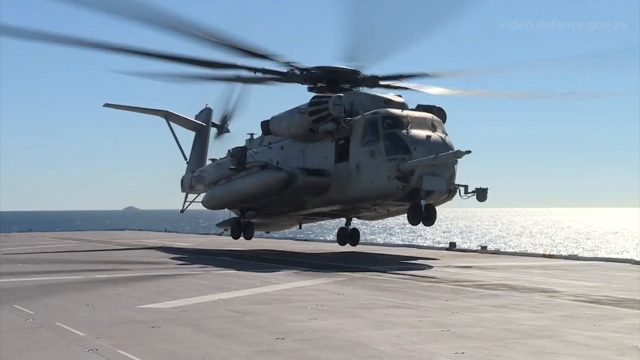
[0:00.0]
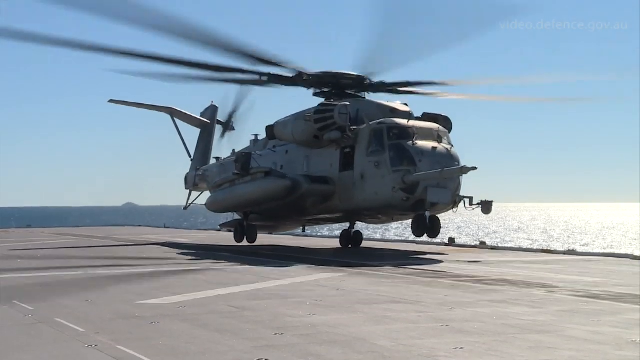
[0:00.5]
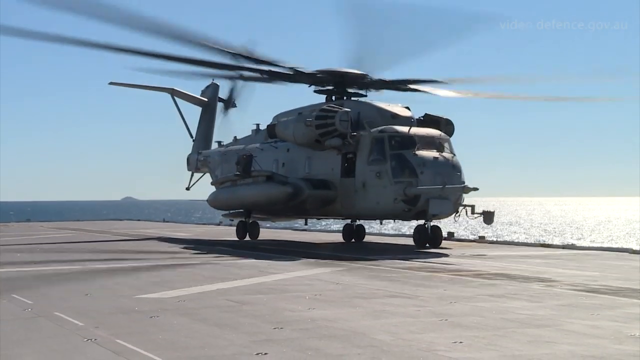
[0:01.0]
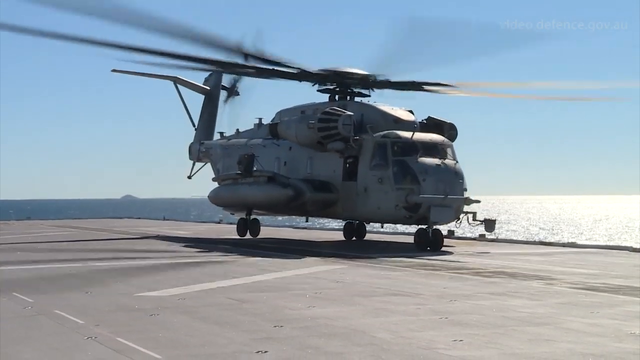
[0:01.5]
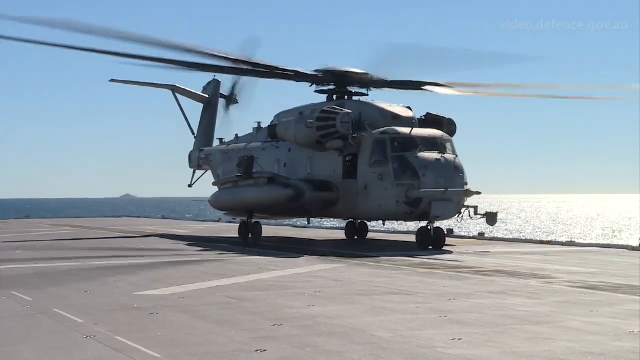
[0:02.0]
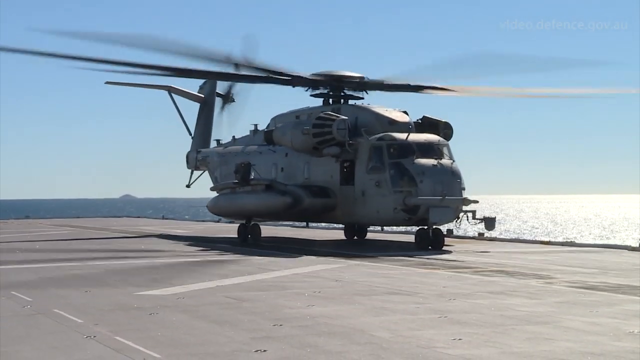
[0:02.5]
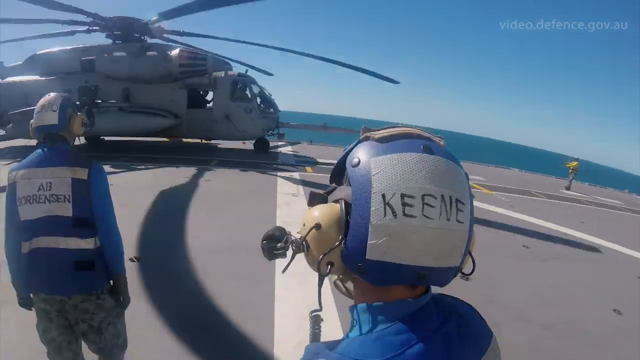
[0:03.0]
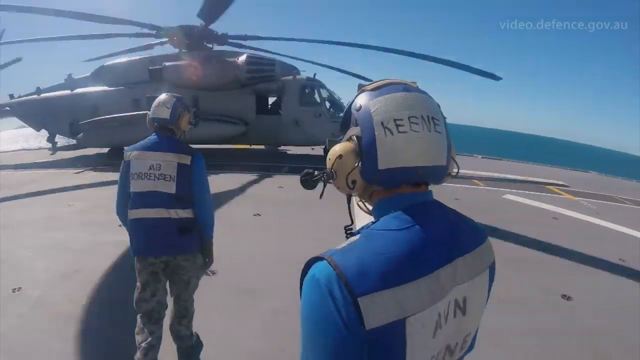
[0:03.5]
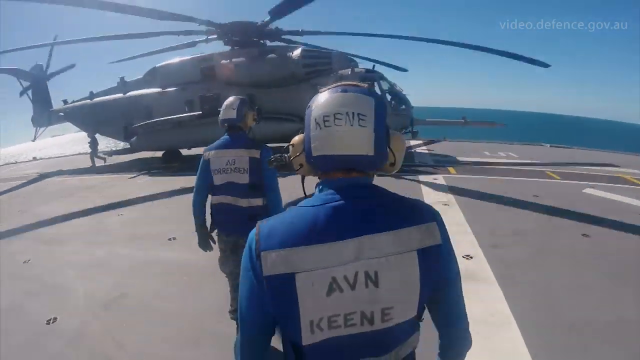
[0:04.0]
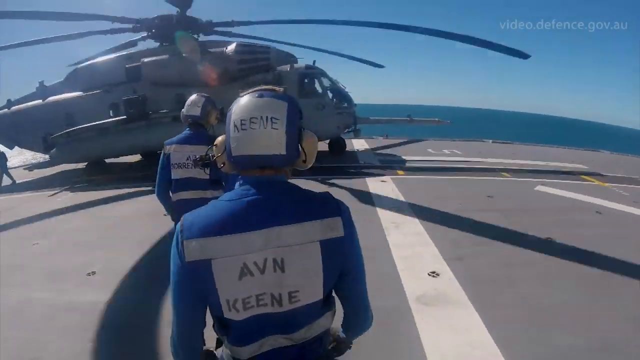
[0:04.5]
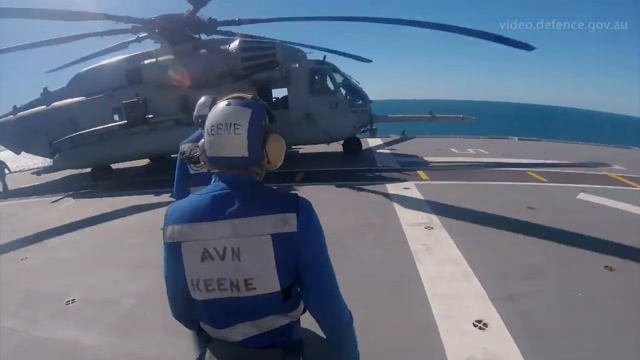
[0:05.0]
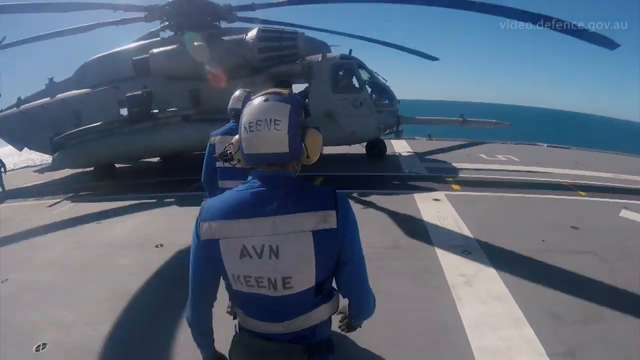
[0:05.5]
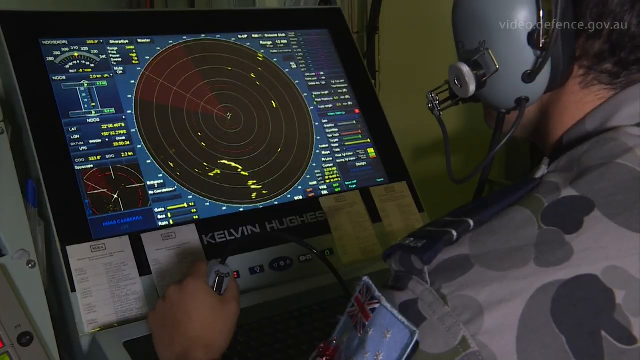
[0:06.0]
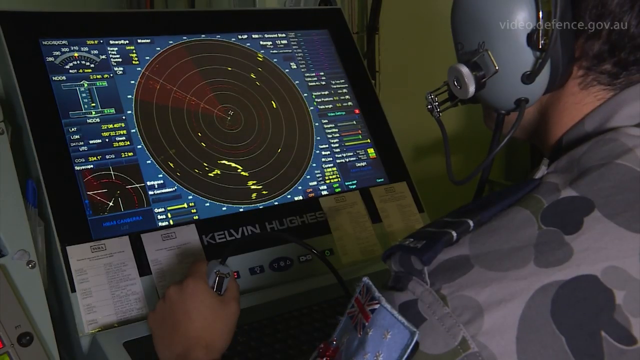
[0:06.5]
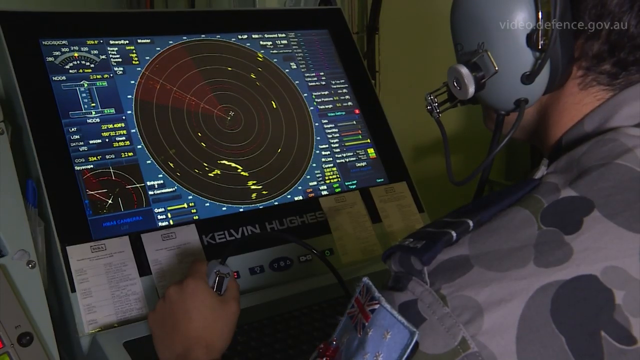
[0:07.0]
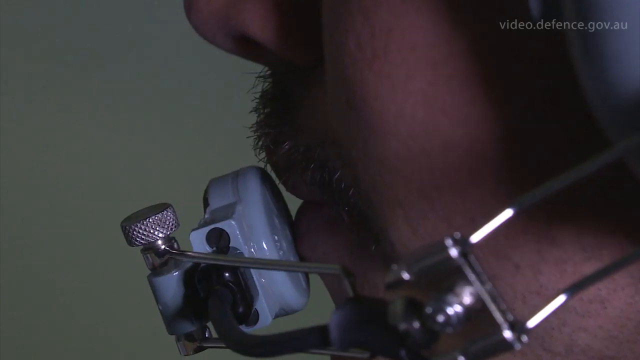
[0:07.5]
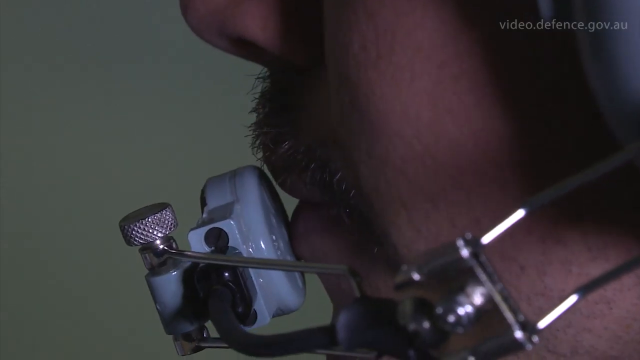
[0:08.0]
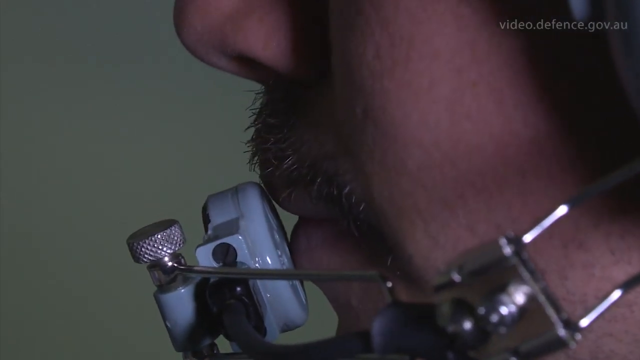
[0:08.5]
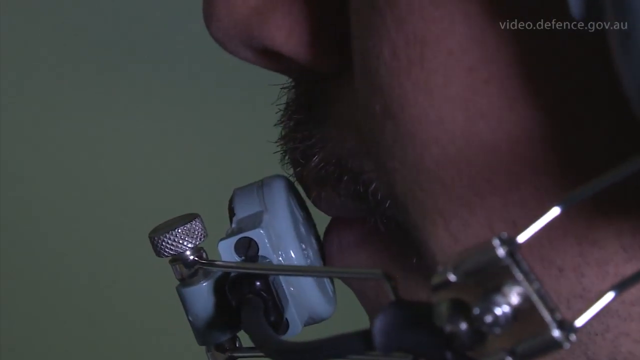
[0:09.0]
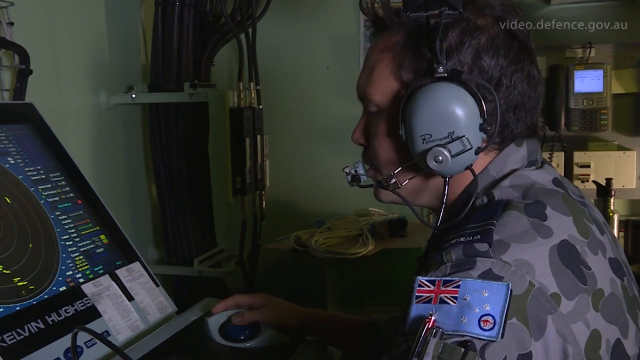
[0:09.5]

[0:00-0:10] A helicopter is on a wide, flat space with a gray deck, and behind it is an open sea with still, dark blue water under a light blue sky. The helicopter has long blades that turn fast as it lands. People in bright blue jackets and white helmets that shine in the sun appear; there is black writing on the back of a jacket, and the helmet also has some words on it. The people stand together in a group, facing the helicopter. The video then cuts to a close-up of a man's face. He has light skin and a dark mustache, and a silver microphone is near his mouth. The background is green, and he is sitting, apparently at a computer doing something.